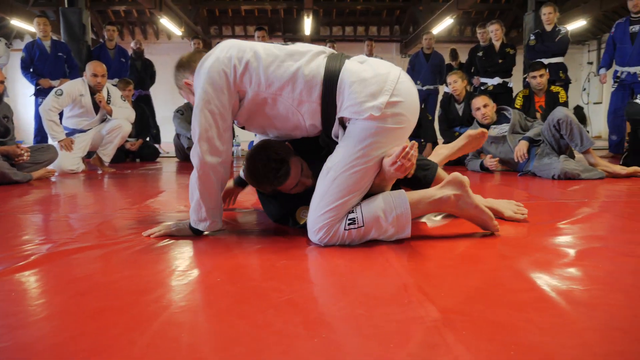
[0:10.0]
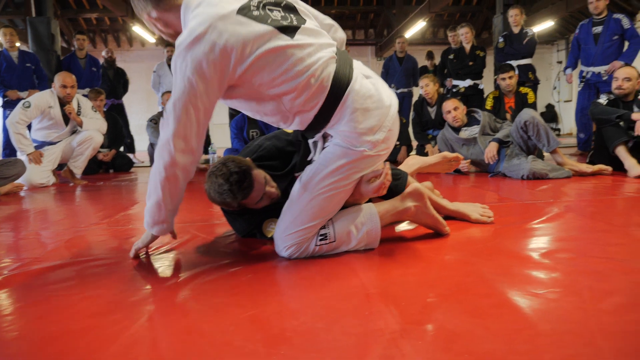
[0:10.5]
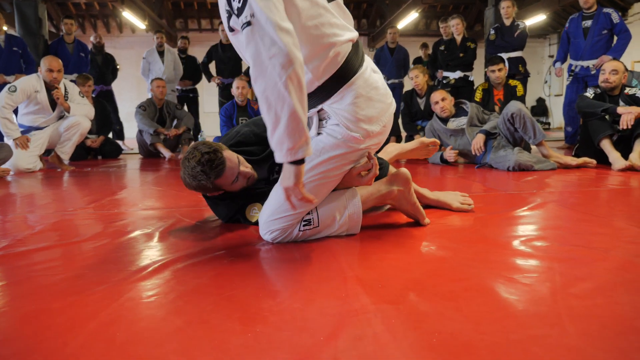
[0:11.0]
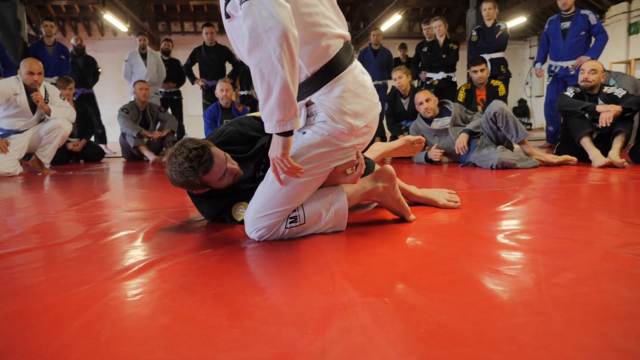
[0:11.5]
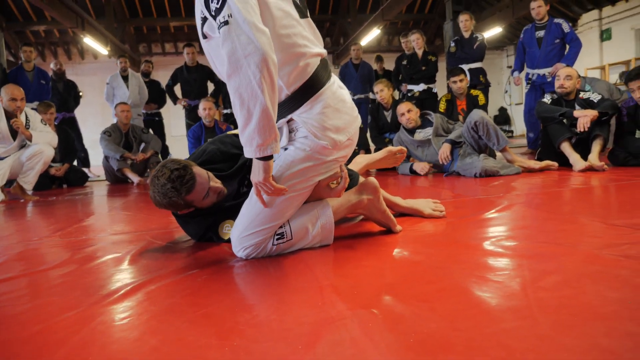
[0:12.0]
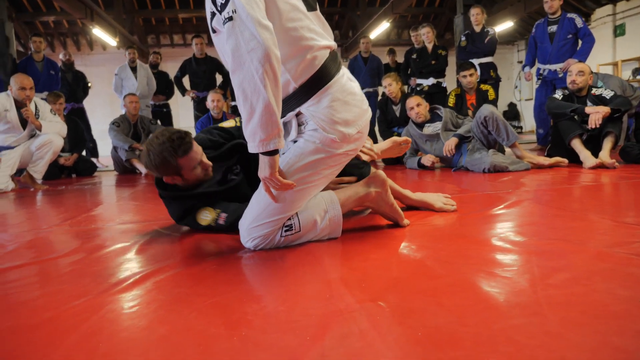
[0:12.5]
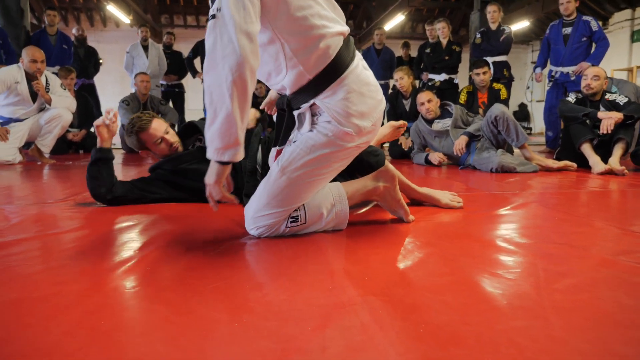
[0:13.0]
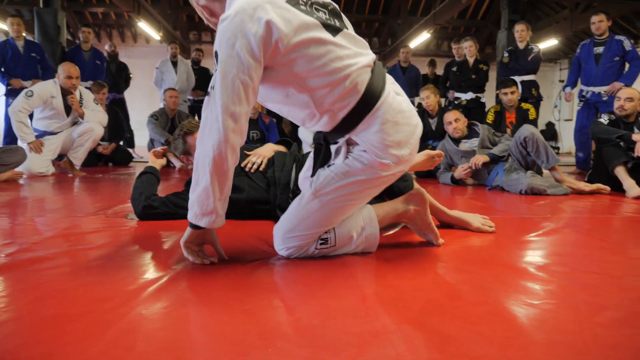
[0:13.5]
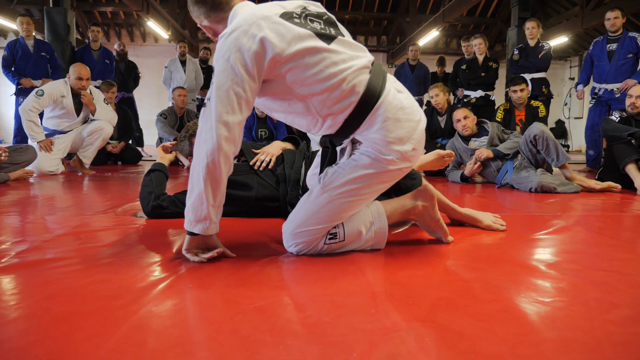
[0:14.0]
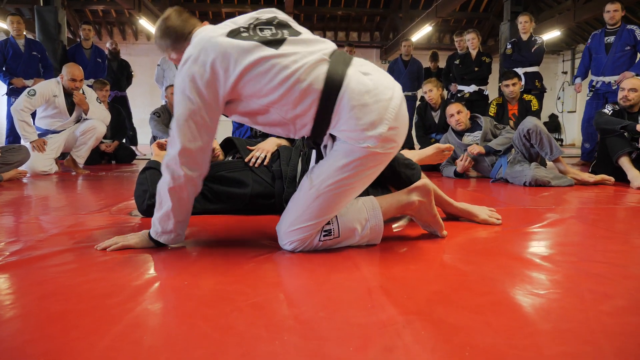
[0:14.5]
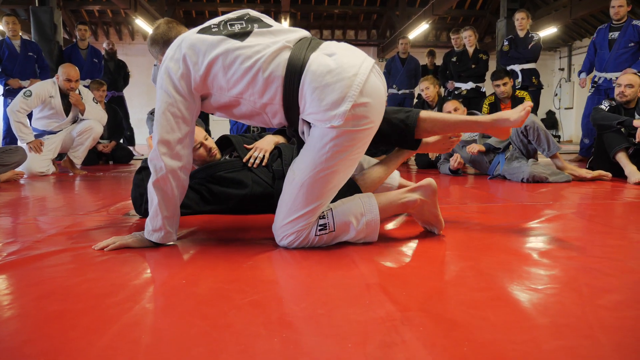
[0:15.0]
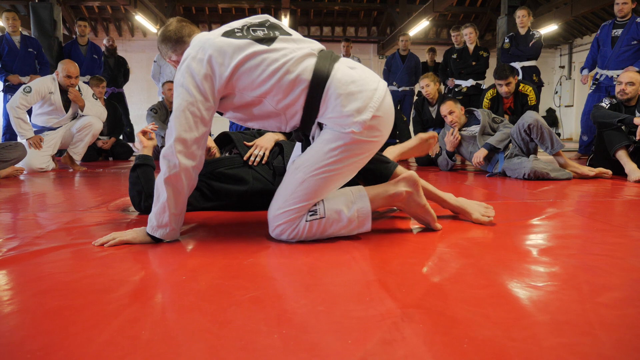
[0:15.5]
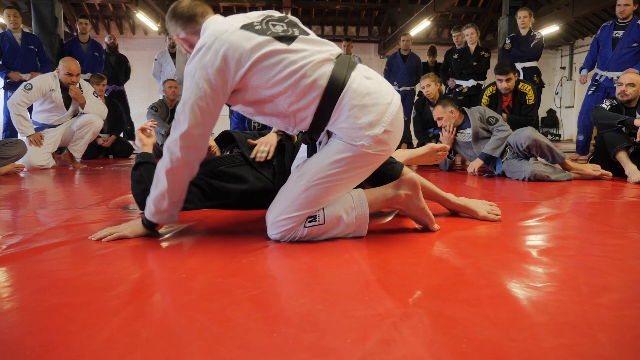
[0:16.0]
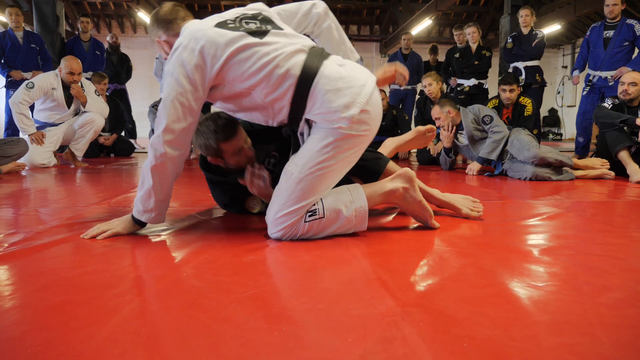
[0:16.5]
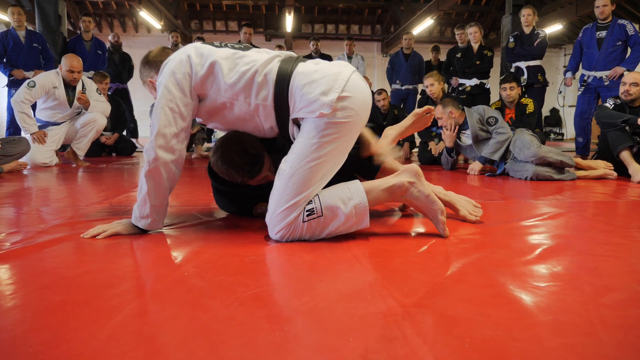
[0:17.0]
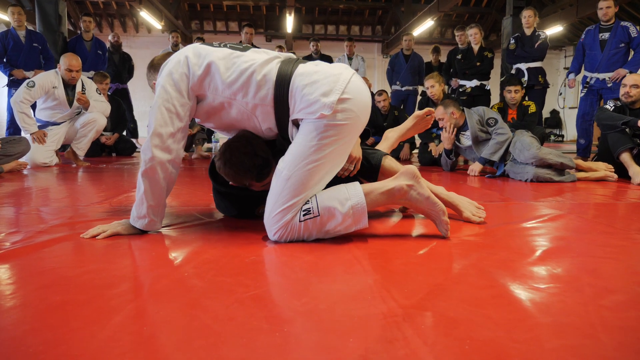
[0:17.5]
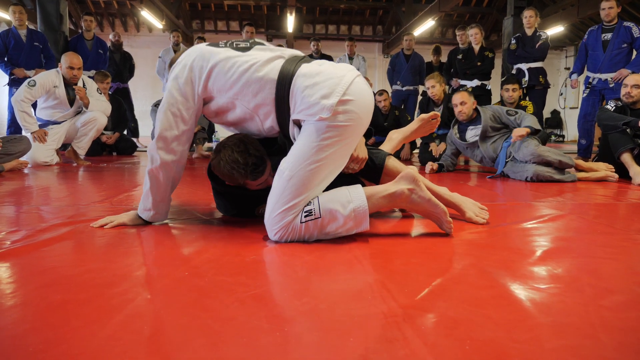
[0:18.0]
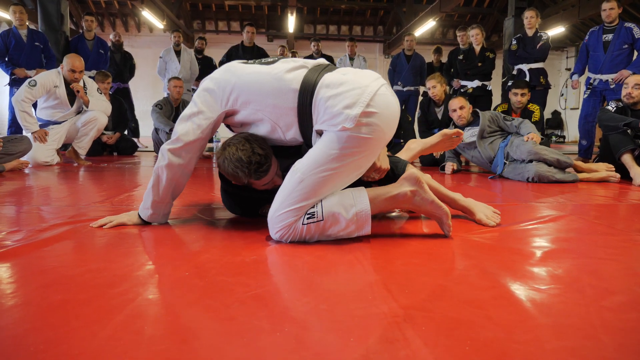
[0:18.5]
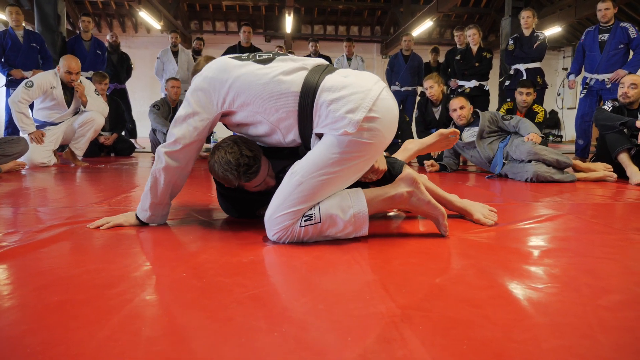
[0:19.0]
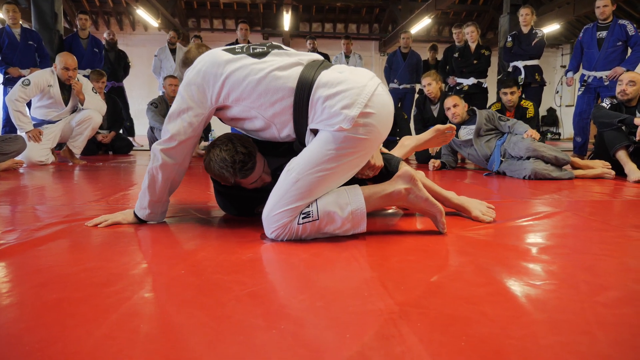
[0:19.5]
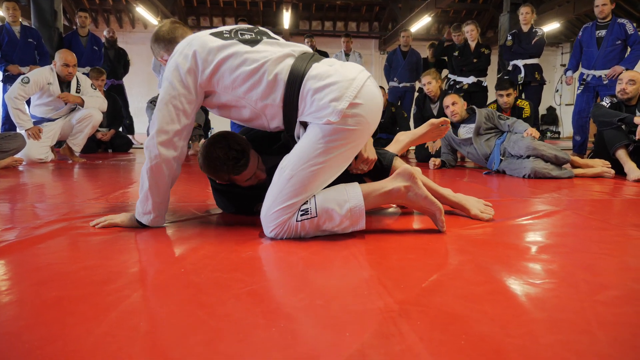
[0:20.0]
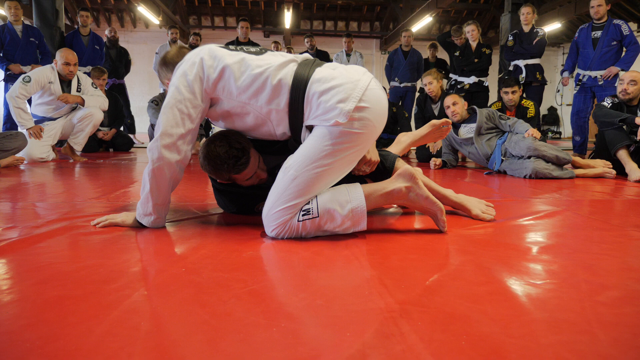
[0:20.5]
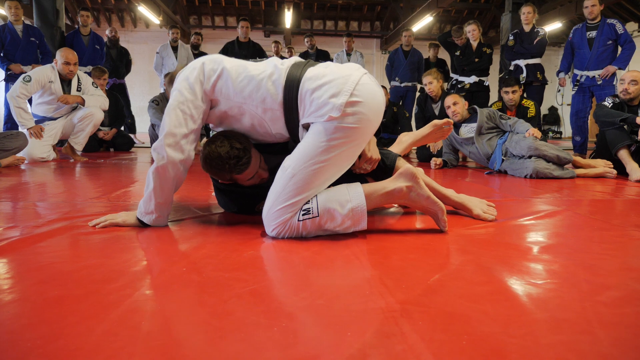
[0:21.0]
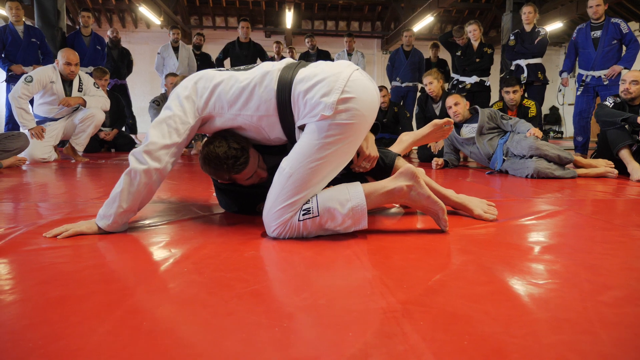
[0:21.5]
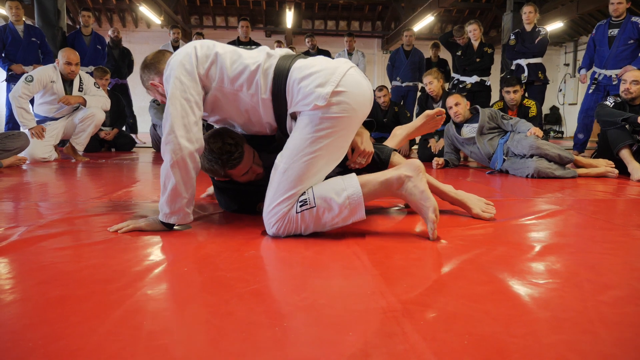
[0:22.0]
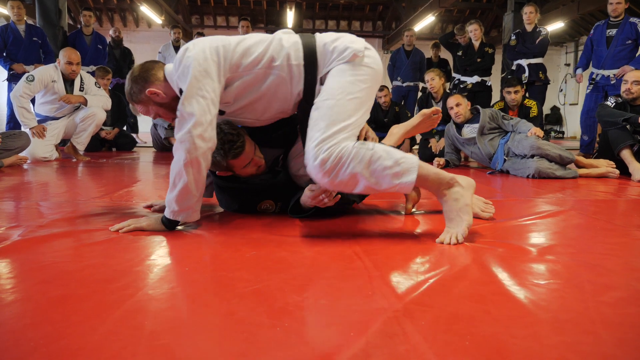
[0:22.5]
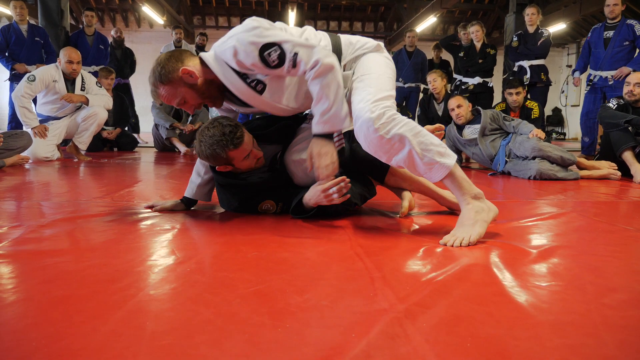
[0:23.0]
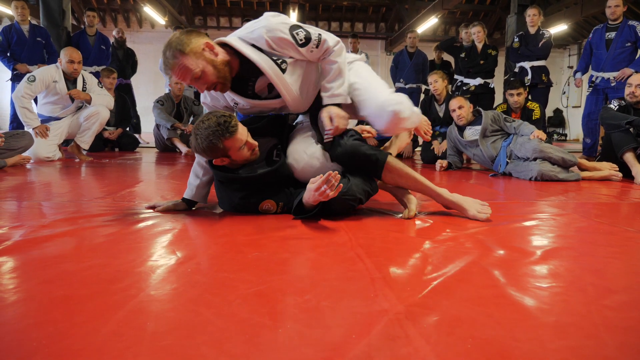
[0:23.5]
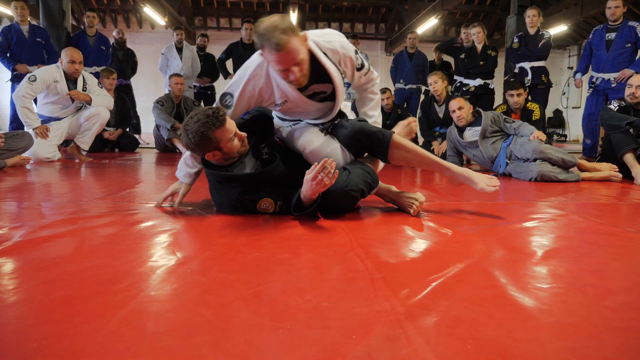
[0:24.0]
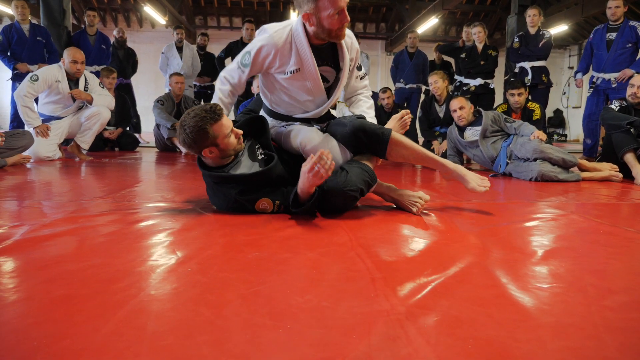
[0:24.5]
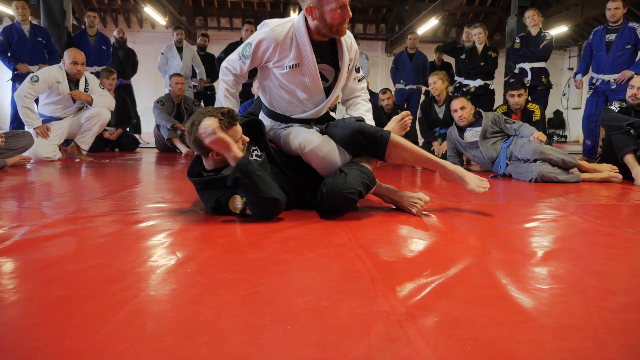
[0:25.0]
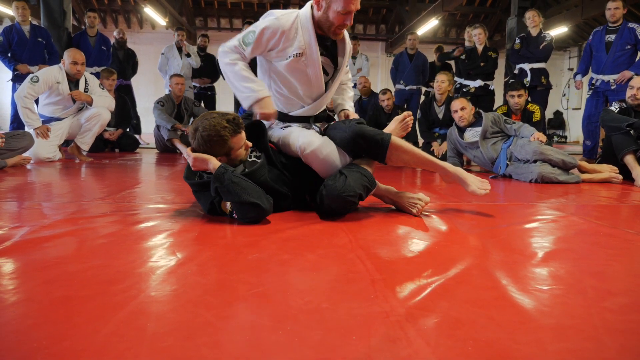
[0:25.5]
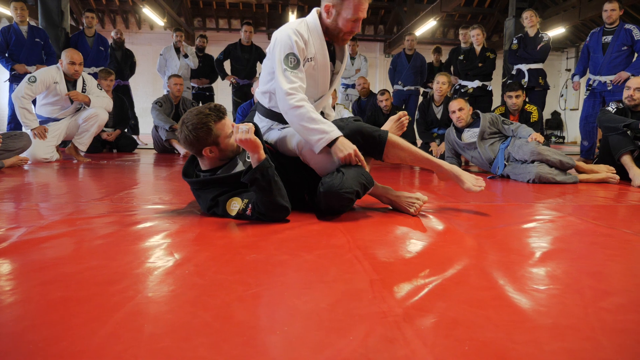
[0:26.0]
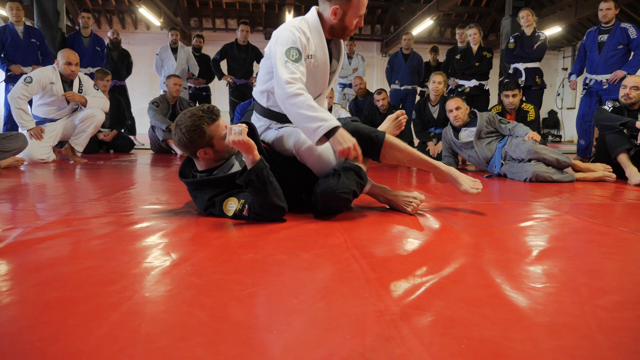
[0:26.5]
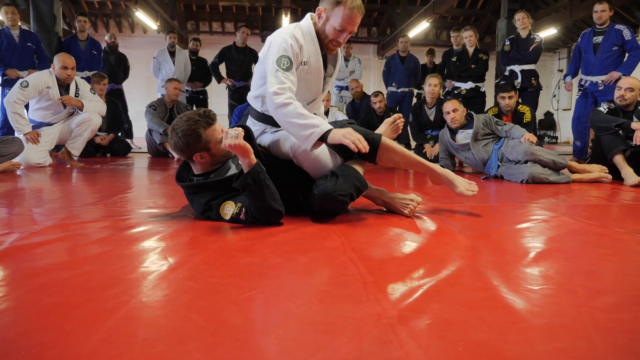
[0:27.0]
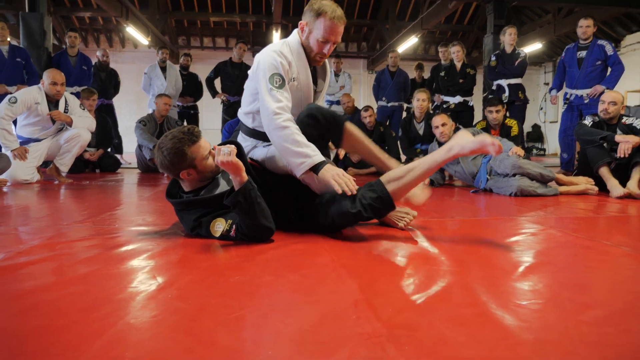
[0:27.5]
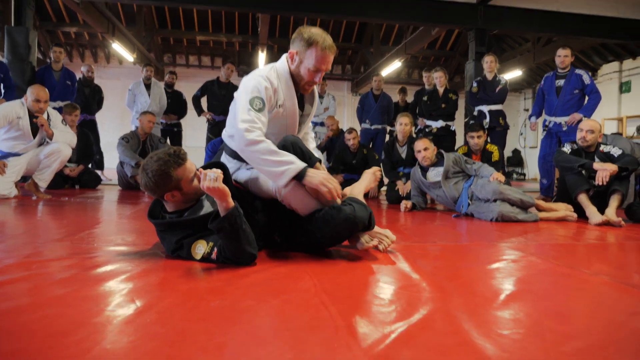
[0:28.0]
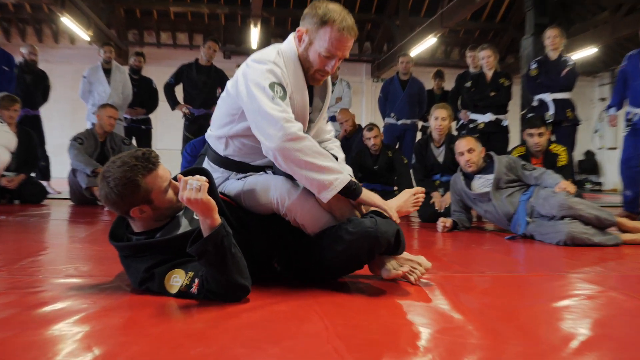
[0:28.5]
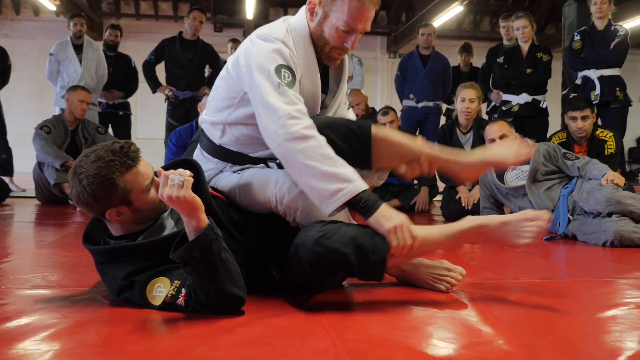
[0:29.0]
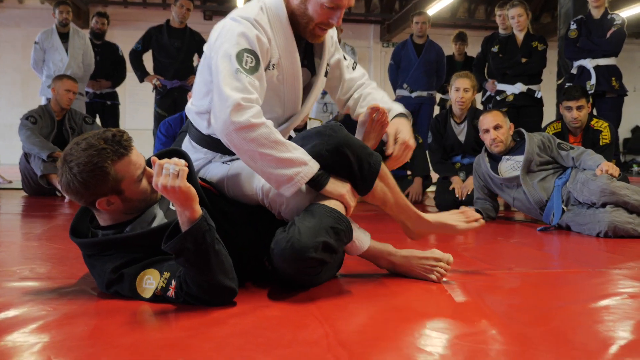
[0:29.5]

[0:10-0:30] The man on top in the white karate jumpsuit gets up to one knee; his head and shoulders are not visible because the camera is focused more on the man on the bottom. People around them just watch, wearing a variety of colors of karate jumpsuits, although most are black. The man on the ground kind of lays back with his legs locked over the right leg of the man in white. They engage again, with the man in the white jumpsuit leaning over him, and then he shifts over to his side with his hip kind of on the other man's chest. He points down to one of the man's lower legs, points to the knee and taps it, showing how to lock the legs around this body part as he leads the class. They are in a big wide room with hanging lights, and everyone watches this play out.